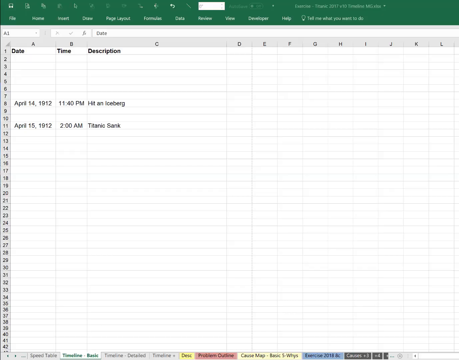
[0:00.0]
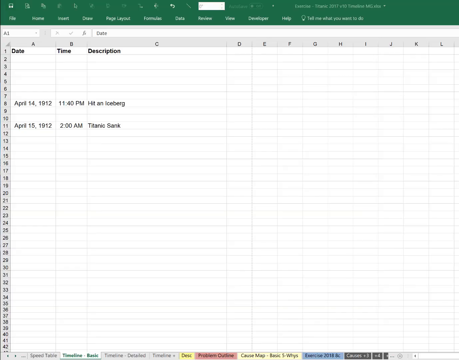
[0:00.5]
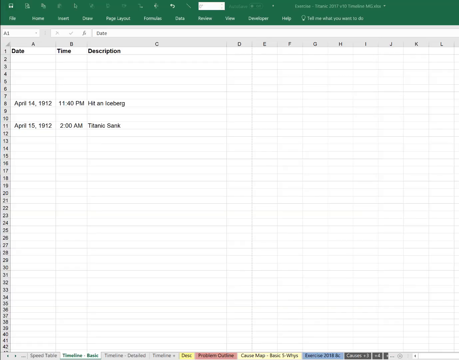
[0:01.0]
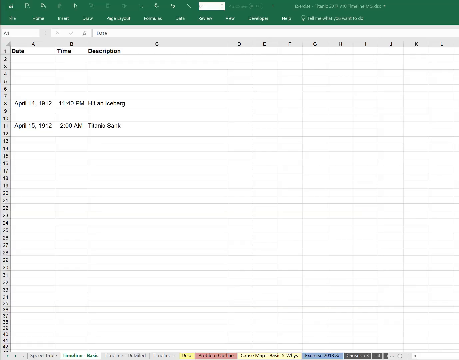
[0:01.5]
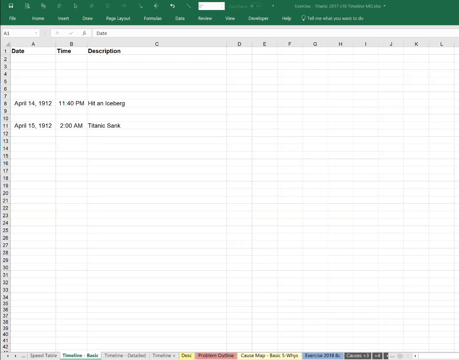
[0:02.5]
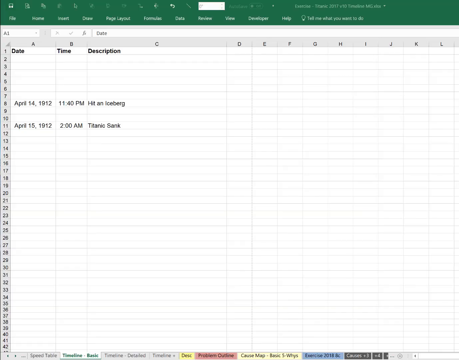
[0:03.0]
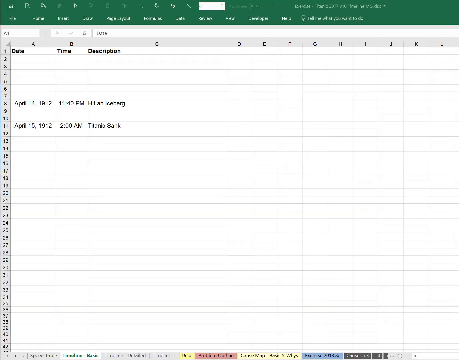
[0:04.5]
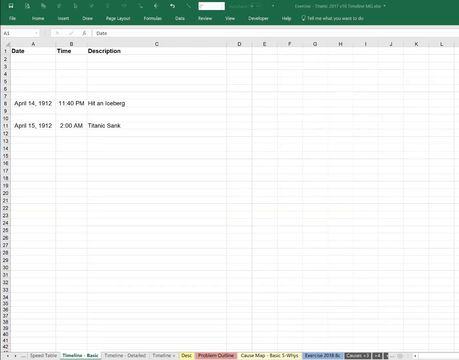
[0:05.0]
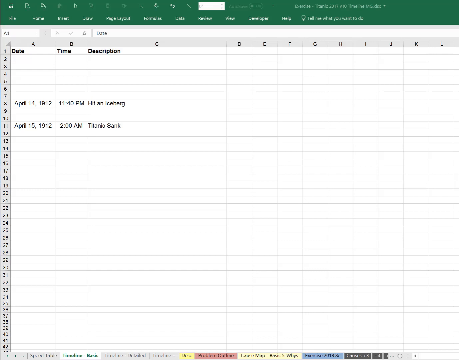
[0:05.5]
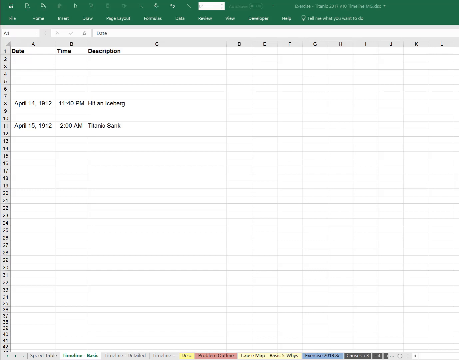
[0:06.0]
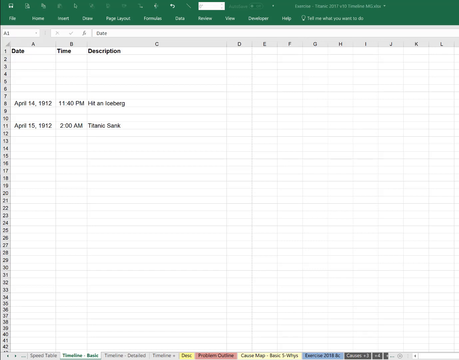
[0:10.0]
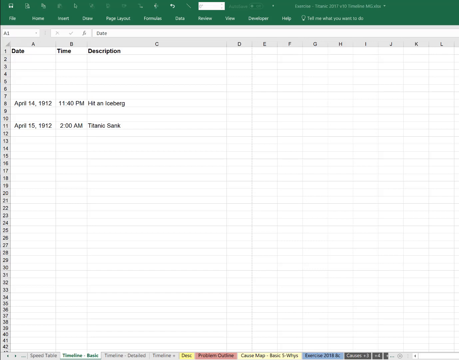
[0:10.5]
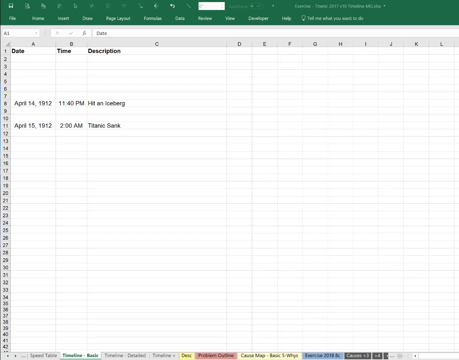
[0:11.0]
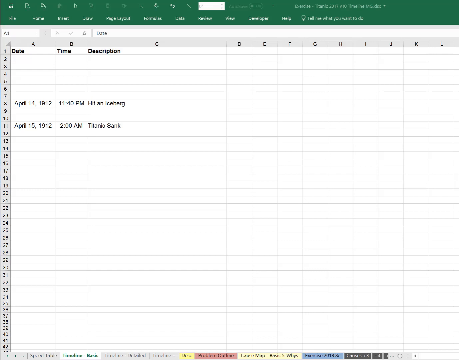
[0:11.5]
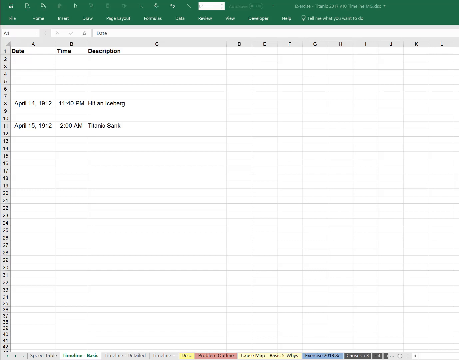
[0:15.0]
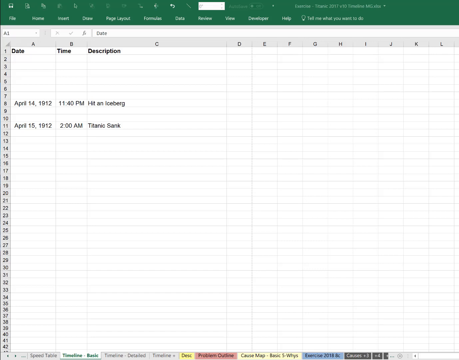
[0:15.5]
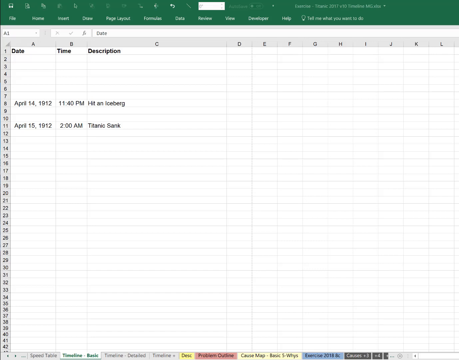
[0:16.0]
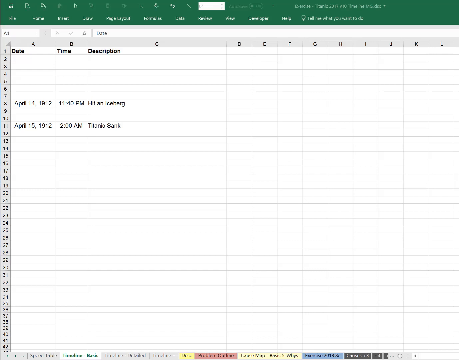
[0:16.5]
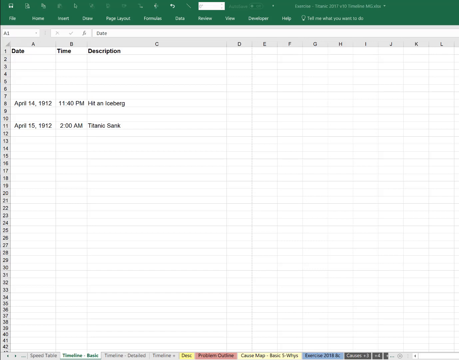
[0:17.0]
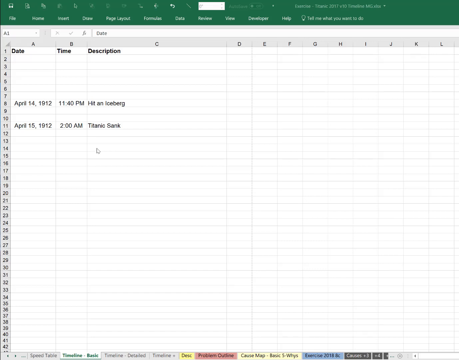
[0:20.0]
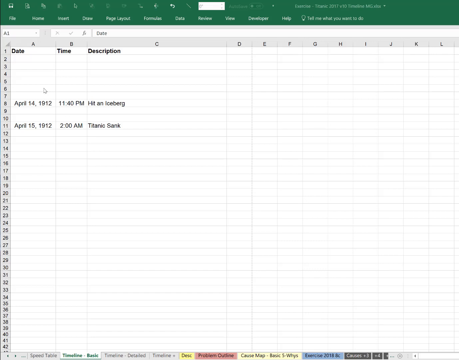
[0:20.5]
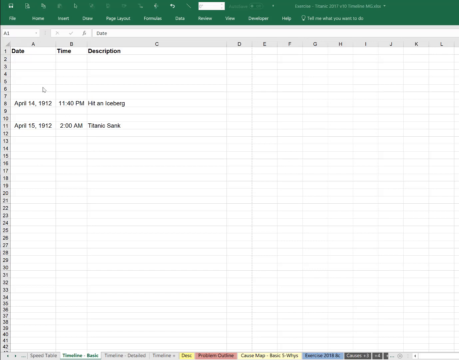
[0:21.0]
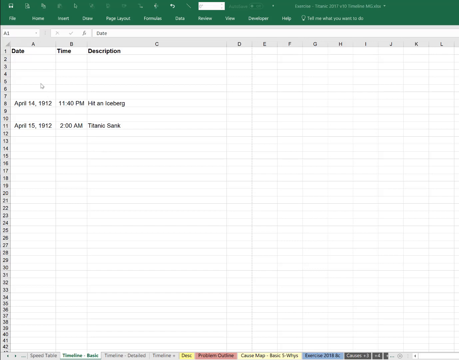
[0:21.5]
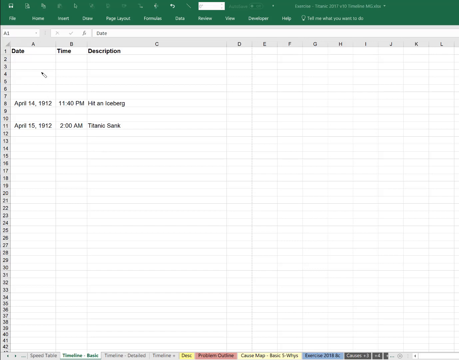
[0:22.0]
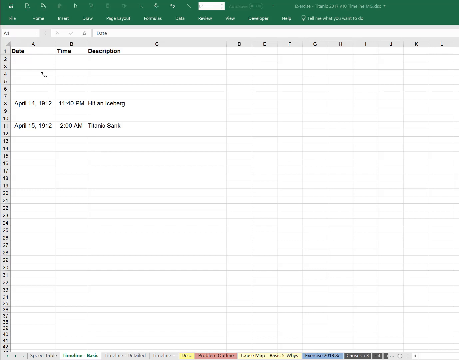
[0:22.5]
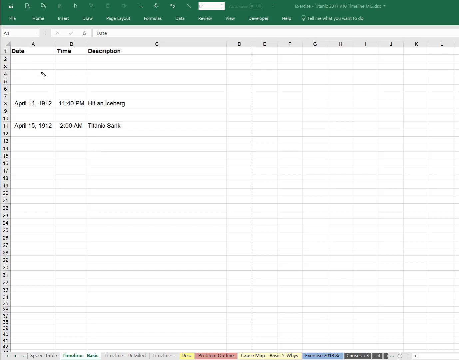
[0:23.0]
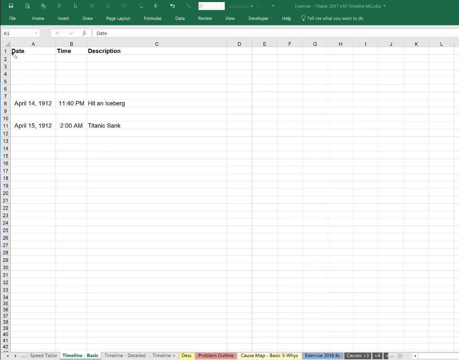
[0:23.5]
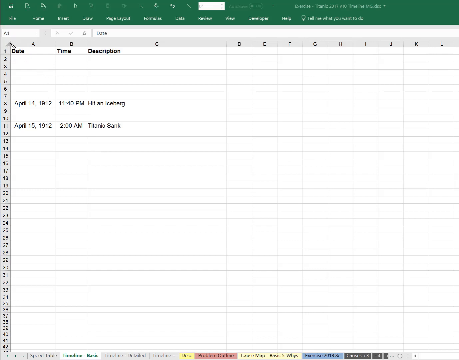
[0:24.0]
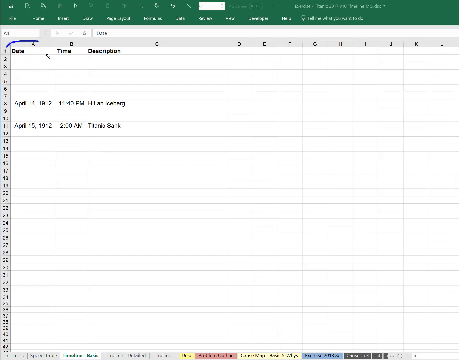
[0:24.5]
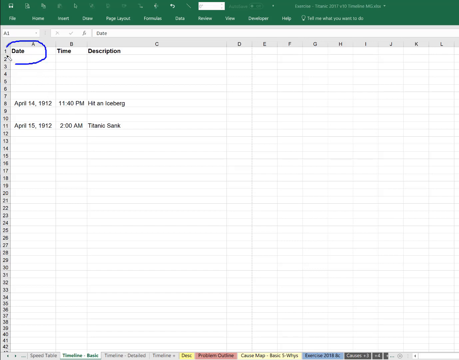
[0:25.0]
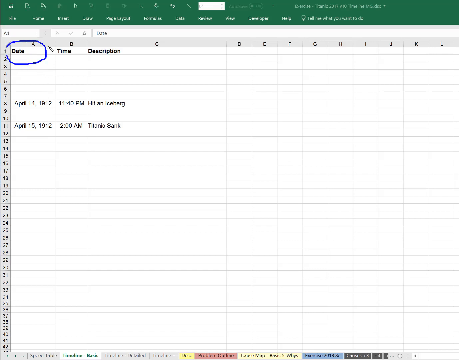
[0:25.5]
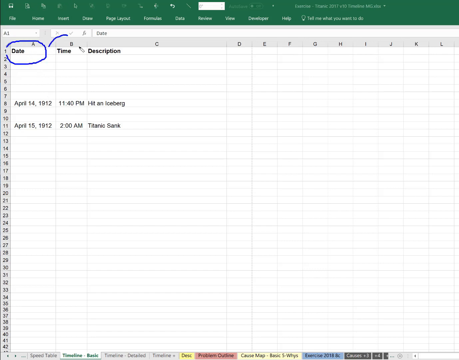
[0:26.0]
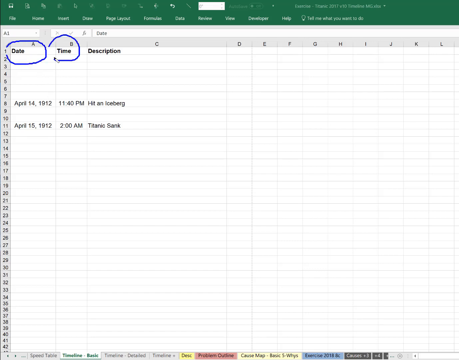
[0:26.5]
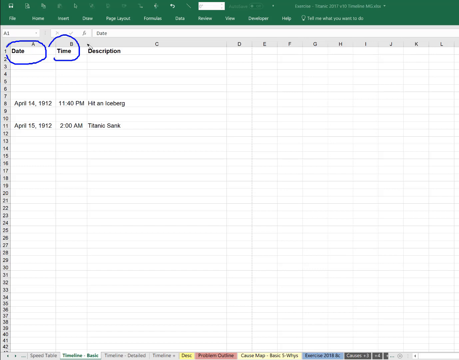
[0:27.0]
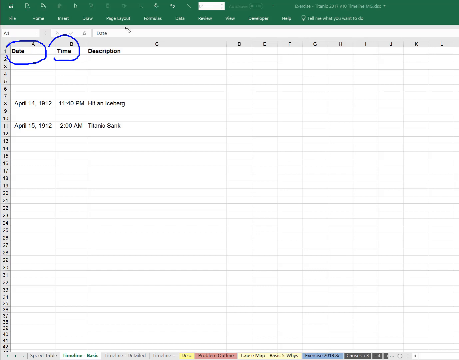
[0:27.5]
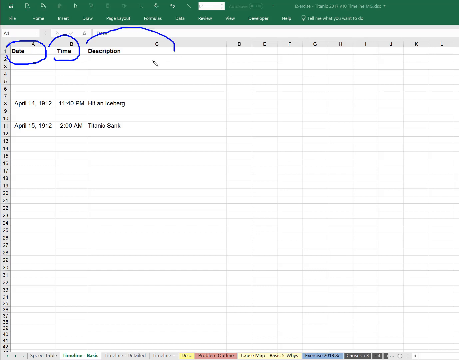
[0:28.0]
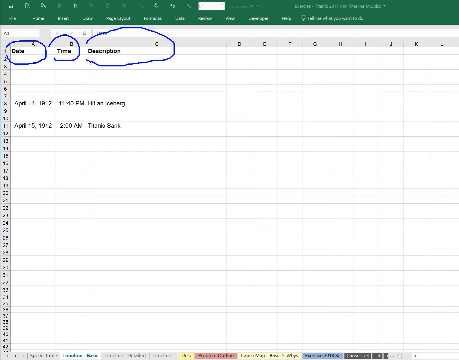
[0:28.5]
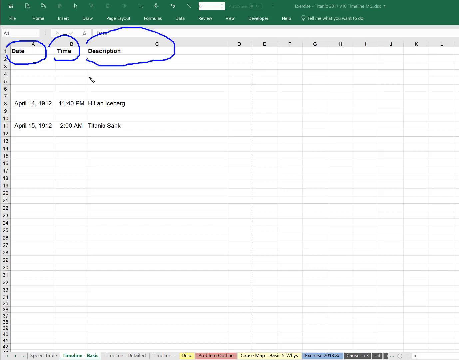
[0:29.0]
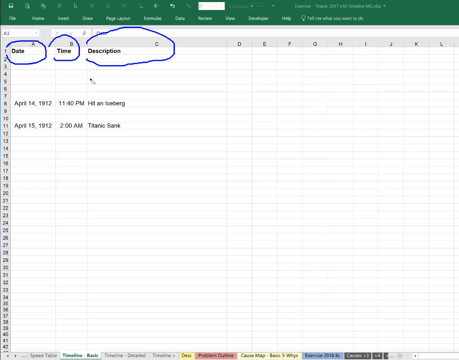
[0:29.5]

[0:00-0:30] An Excel tutorial plays in an Excel browser window with columns A through L and rows 1 through about 30. Column A is headed date, column B time, and column C description. Row 8 reads April 14, 1912, with the time 1140 p.m. and the description "hit an iceberg." Row 11 reads April 15, 1912, at 2 a.m., with the description "Titanic sink." The entries relate to the Titanic. The cursor moves, and the user circles date, time, and description in blue; the circle around description is wider, while those around date and time are much narrower. The header of the sheet is green, and a menu ribbon shows file, what appears to be insert, draw, view, and envelope.